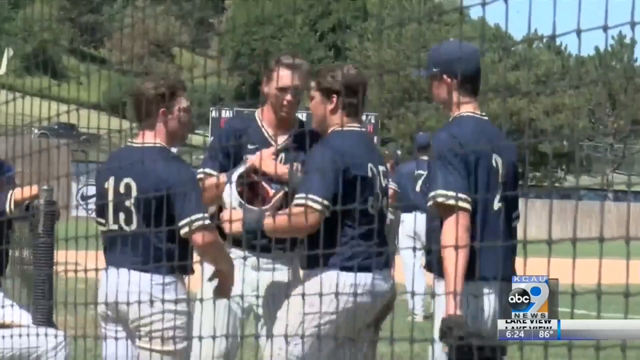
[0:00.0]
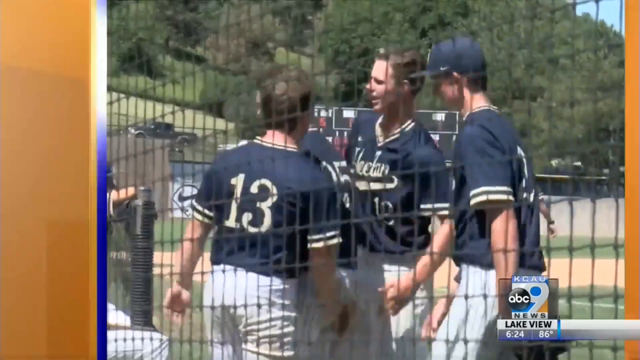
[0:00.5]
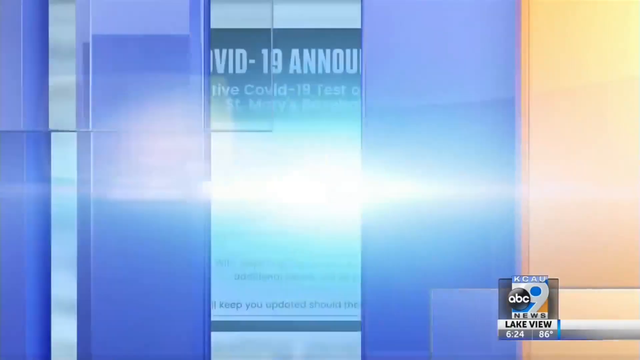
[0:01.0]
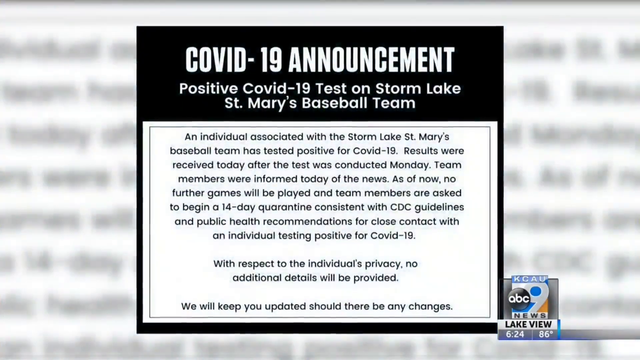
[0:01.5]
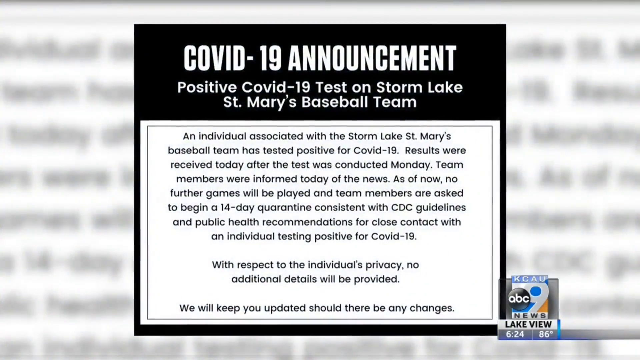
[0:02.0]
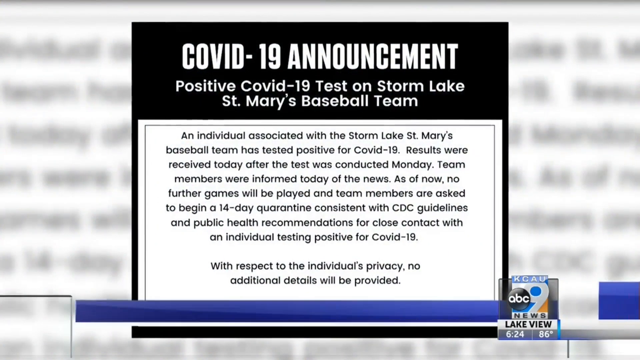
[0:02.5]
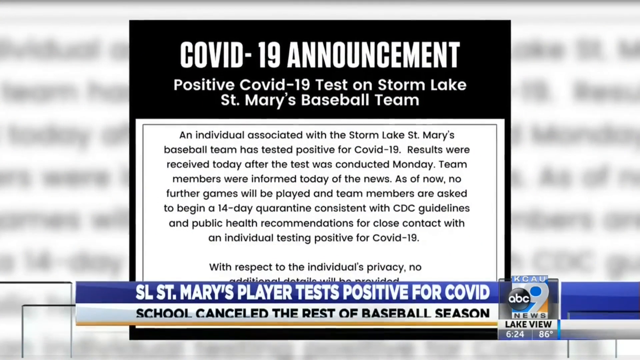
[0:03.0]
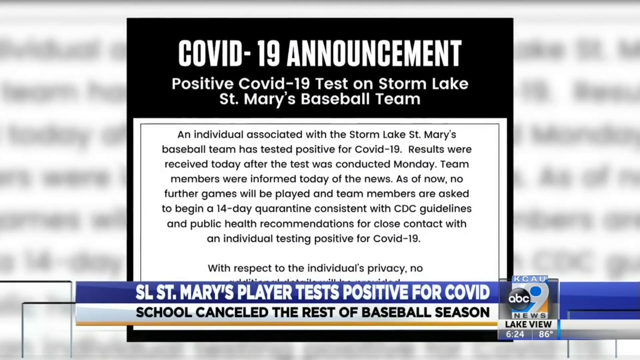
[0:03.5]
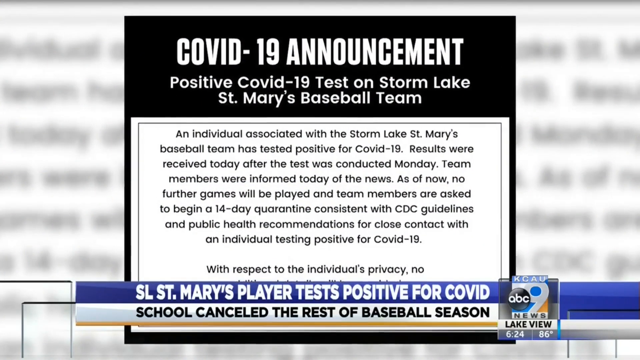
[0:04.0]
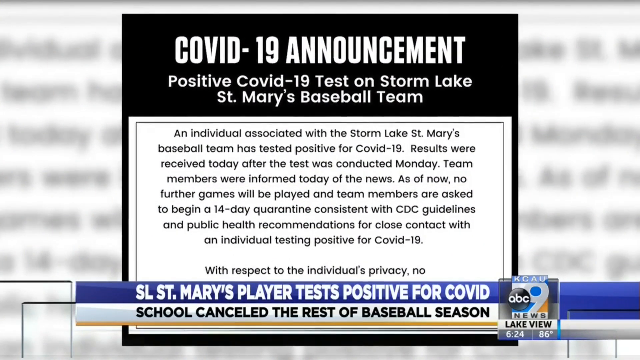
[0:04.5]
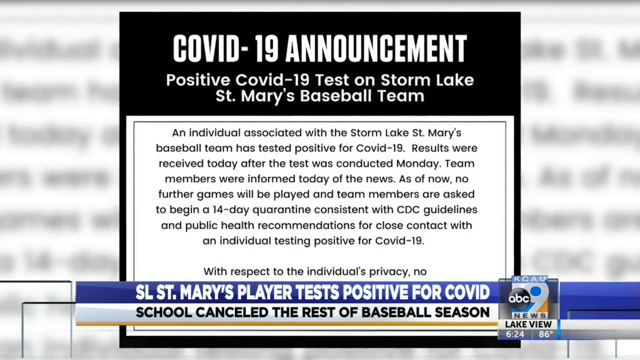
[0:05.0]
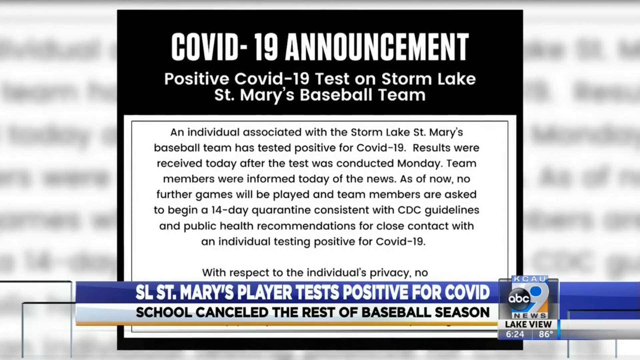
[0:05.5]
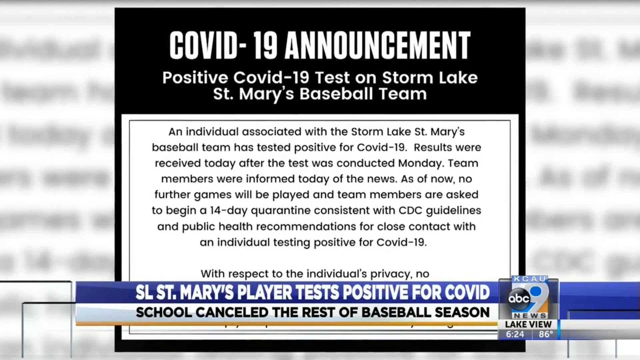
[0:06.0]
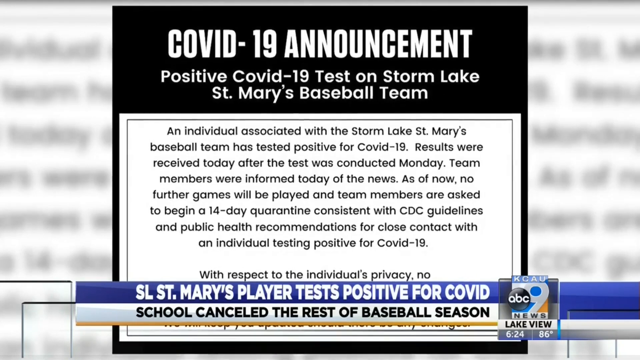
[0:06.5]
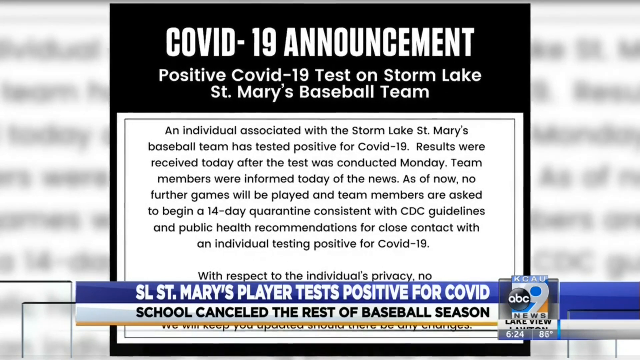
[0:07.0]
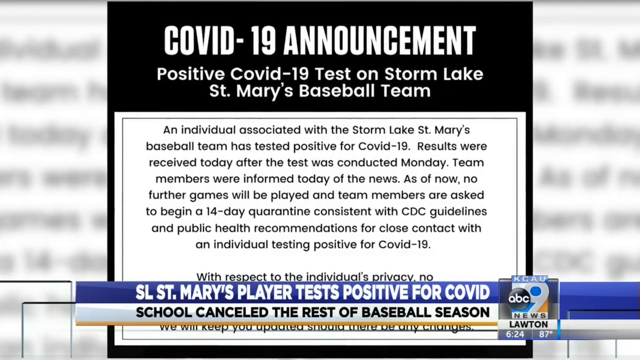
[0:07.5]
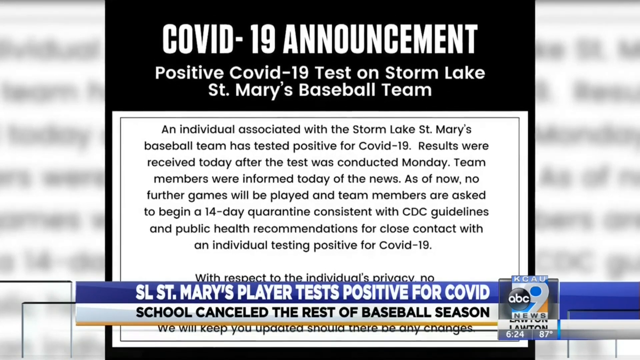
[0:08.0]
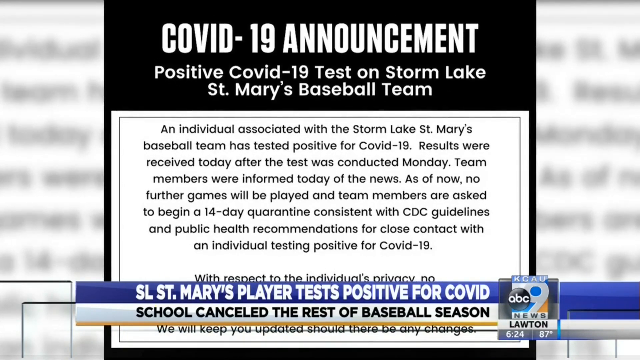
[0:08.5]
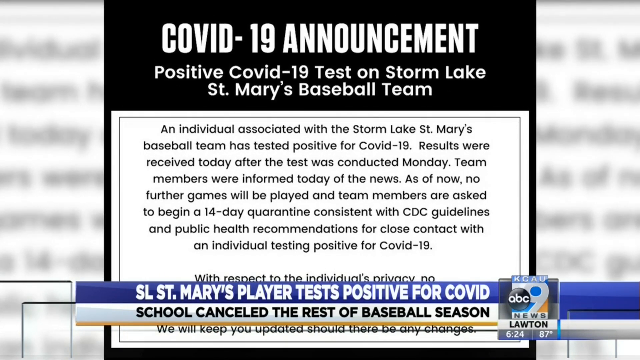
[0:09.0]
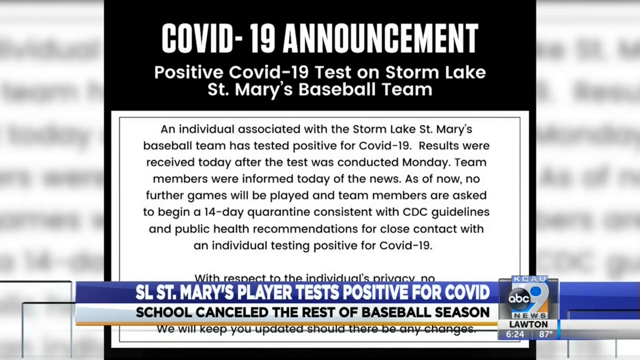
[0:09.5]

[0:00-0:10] A group of men, all dressed in navy blue uniforms, is on a baseball field, seen through the netting that surrounds home plate; just to the right and left of home plate the netting is black. The uniforms are navy blue with white rings around the collar and the sleeves. One man wears a baseball cap. Numbers such as 2, 35 and 13 are visible. The men are all Caucasian. One man appears, taking off his batting helmet. In the bottom right-hand corner of the screen, a logo shows that this is an ABC News broadcast. After a few seconds there is a quick swipe across the screen, and an on-screen COVID-19 announcement appears stating that one of the players on the Storm Lake St. Mary's baseball team tested positive for COVID-19. Some text describes the incident, and at the bottom it says that the rest of the season will be canceled for the team as a result of the one player testing positive. A banner at the bottom of the screen reads "SL St. Mary's player test positive for COVID. School canceled the rest of the baseball season."